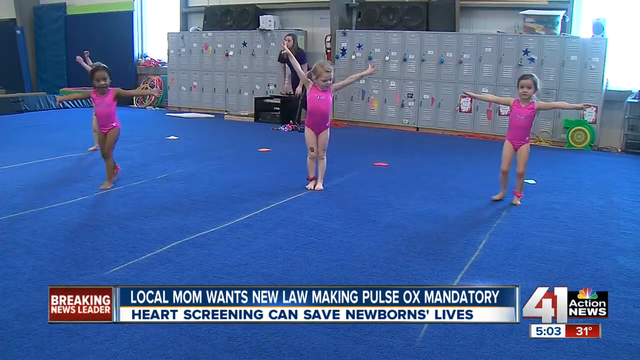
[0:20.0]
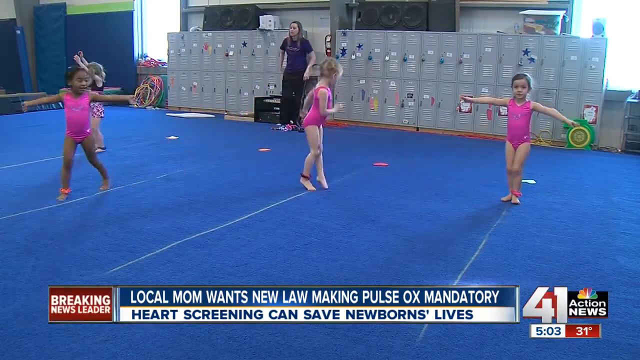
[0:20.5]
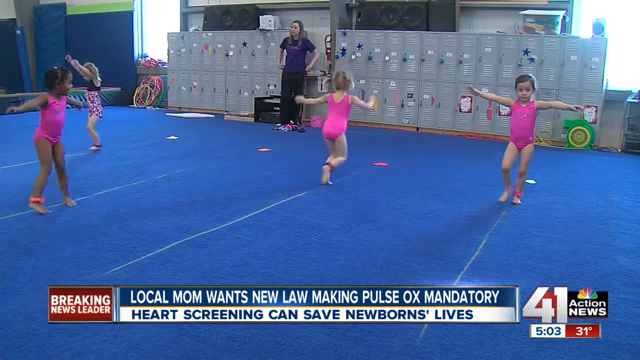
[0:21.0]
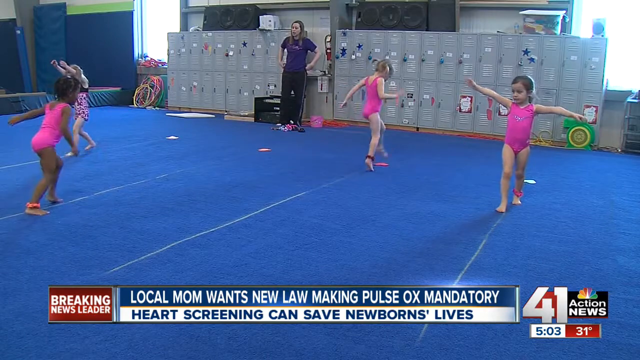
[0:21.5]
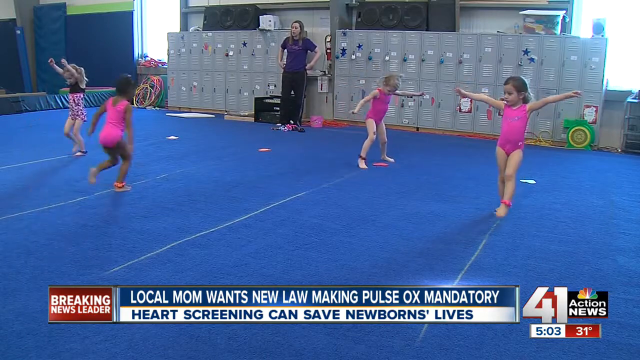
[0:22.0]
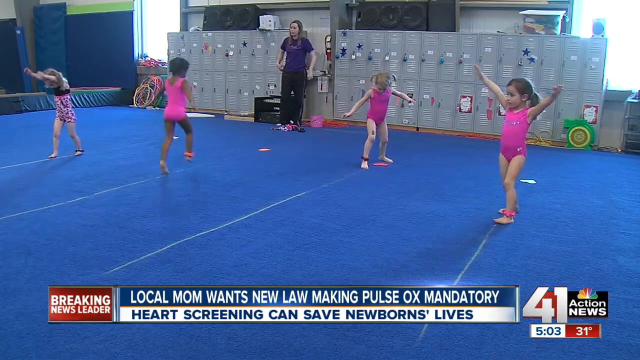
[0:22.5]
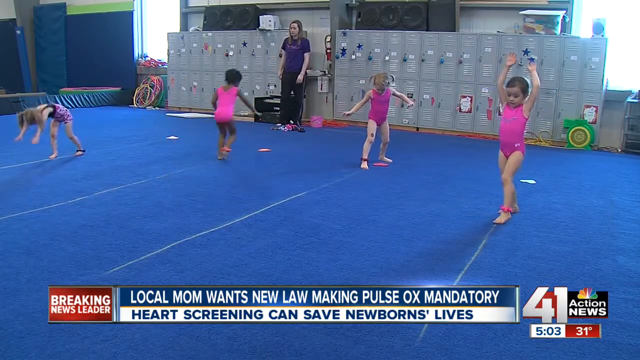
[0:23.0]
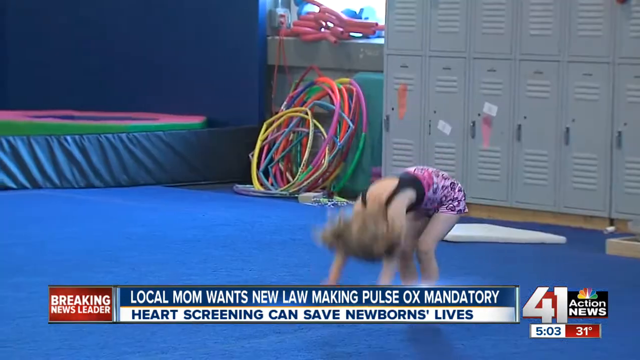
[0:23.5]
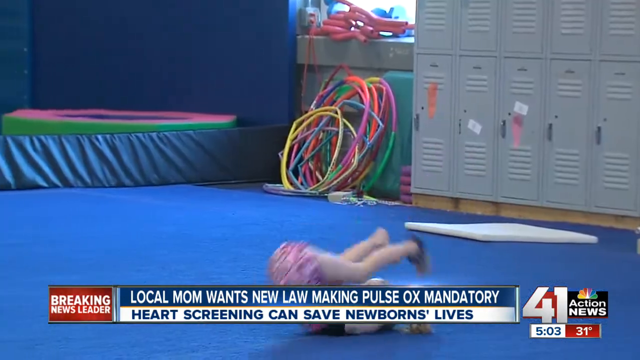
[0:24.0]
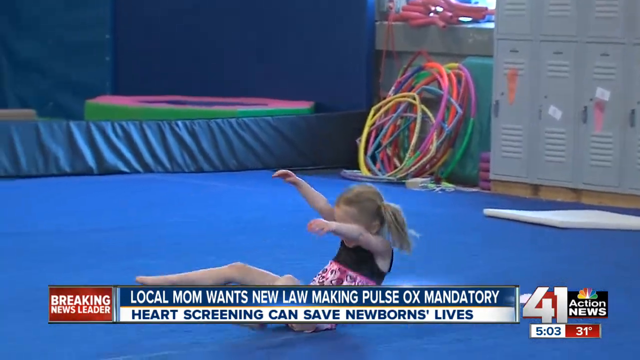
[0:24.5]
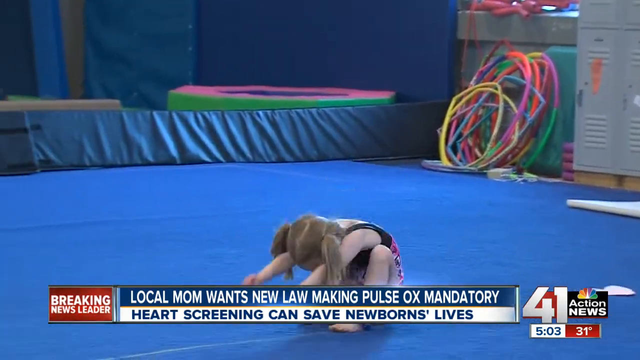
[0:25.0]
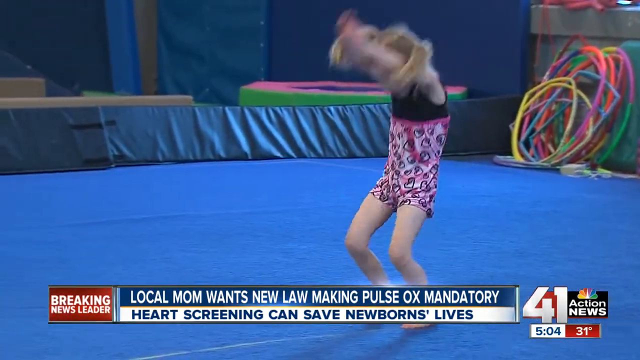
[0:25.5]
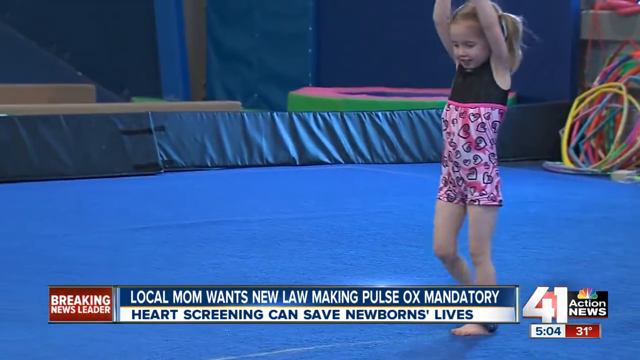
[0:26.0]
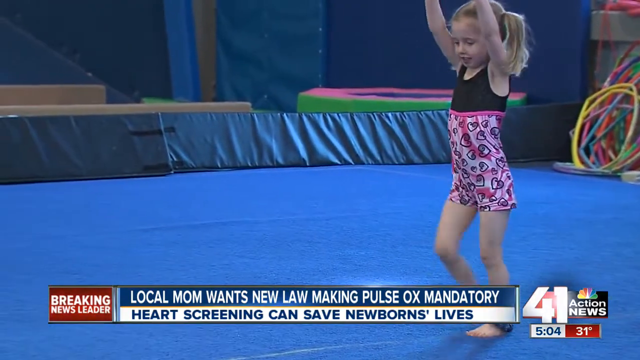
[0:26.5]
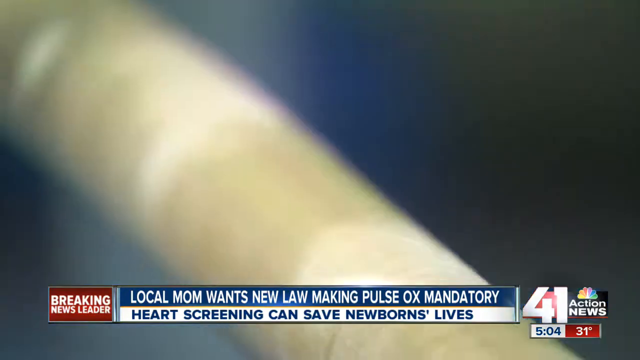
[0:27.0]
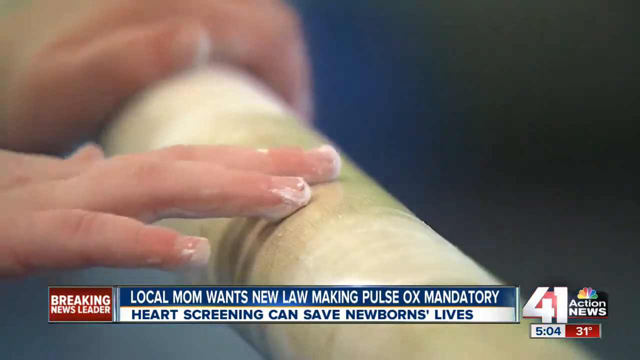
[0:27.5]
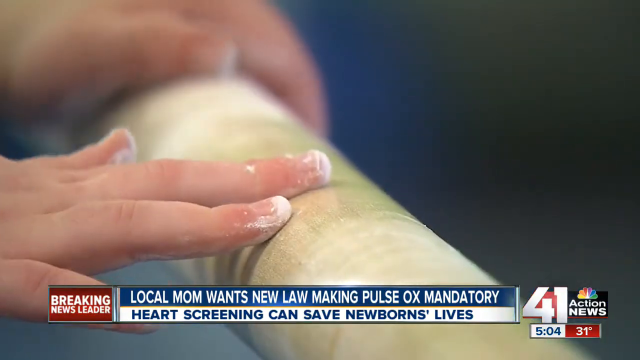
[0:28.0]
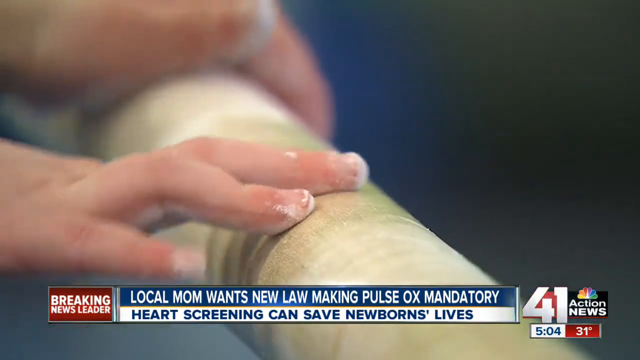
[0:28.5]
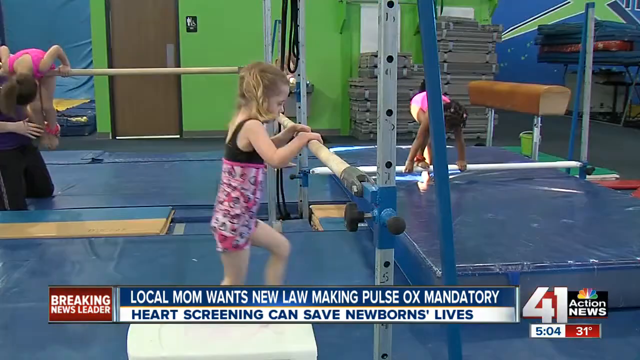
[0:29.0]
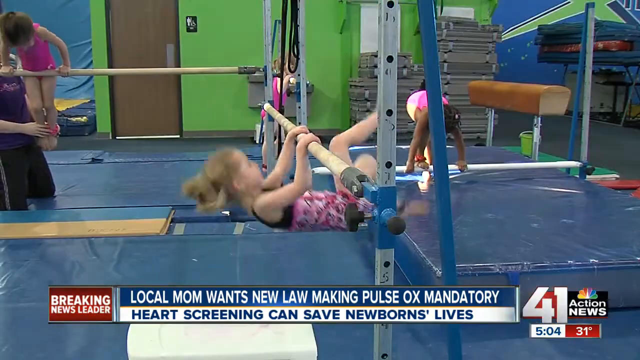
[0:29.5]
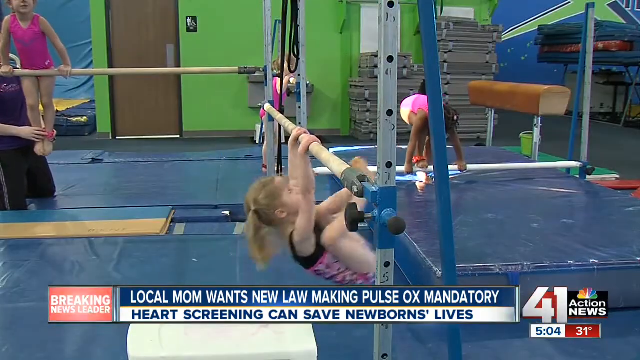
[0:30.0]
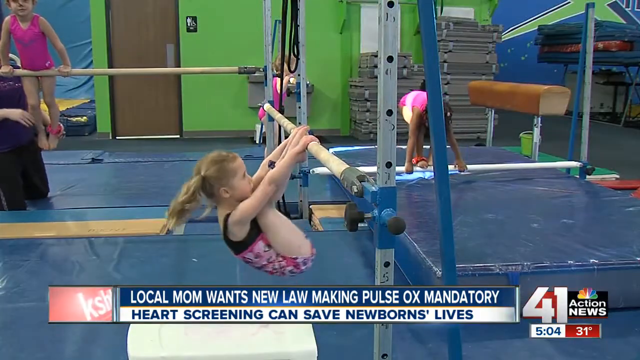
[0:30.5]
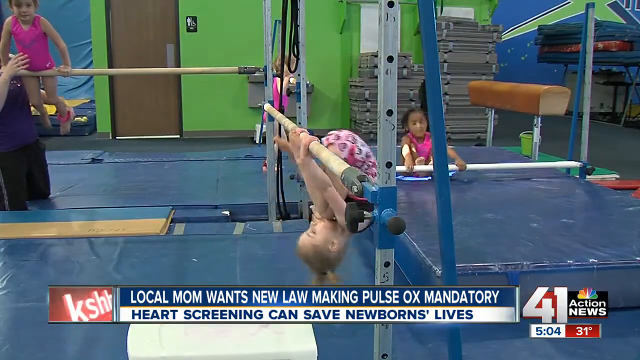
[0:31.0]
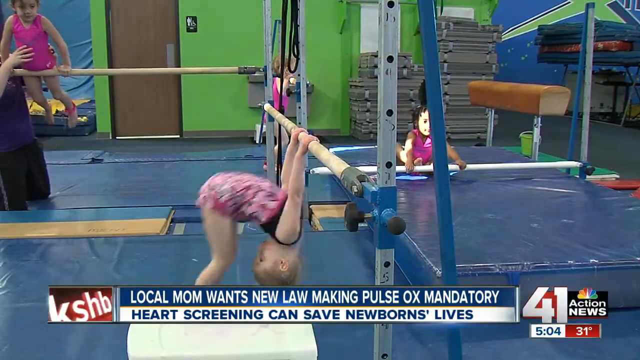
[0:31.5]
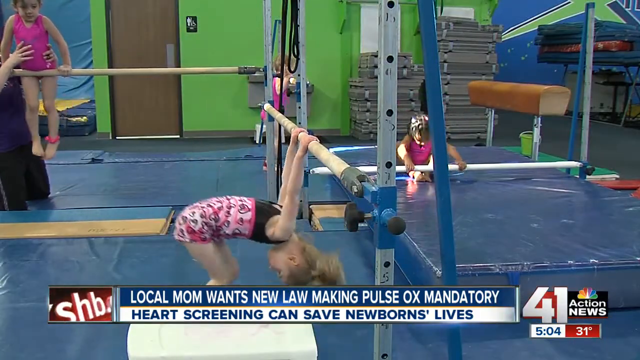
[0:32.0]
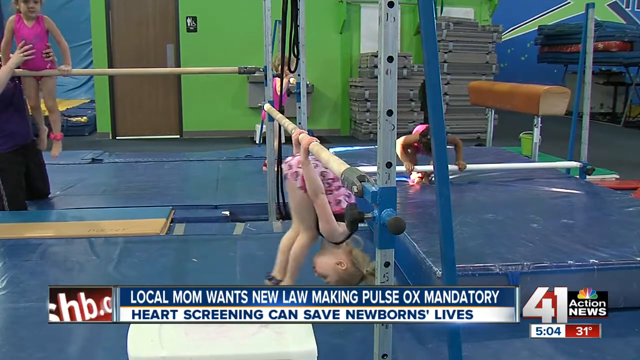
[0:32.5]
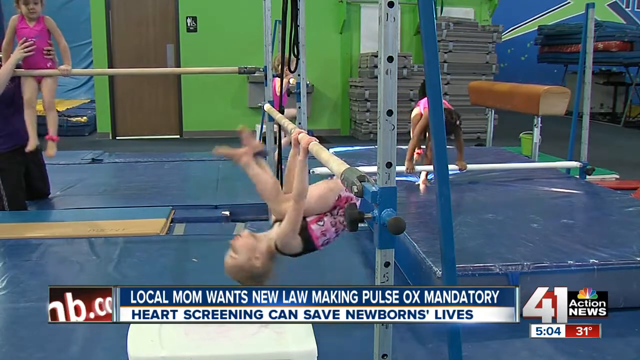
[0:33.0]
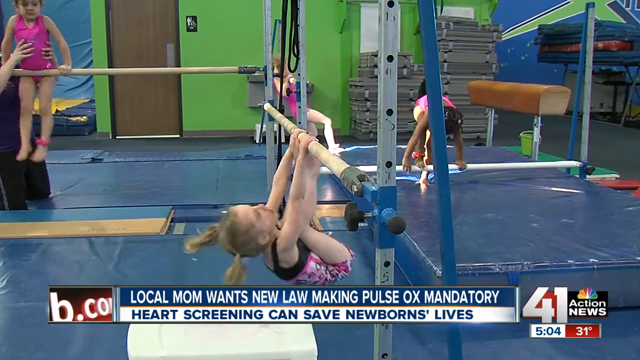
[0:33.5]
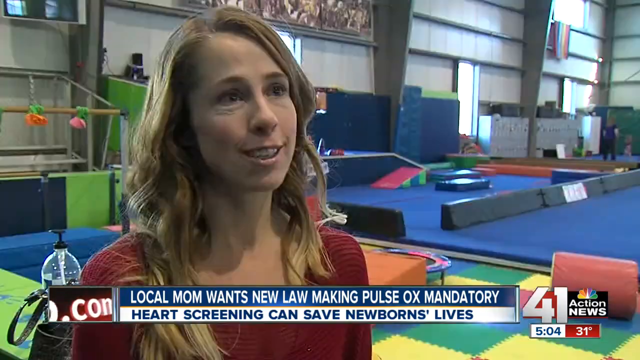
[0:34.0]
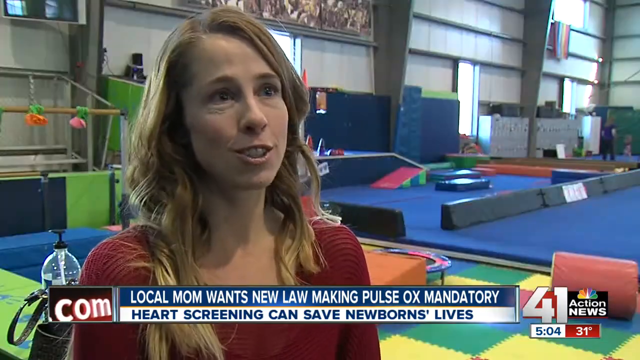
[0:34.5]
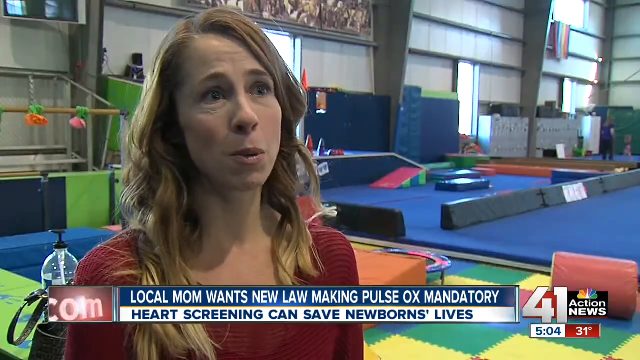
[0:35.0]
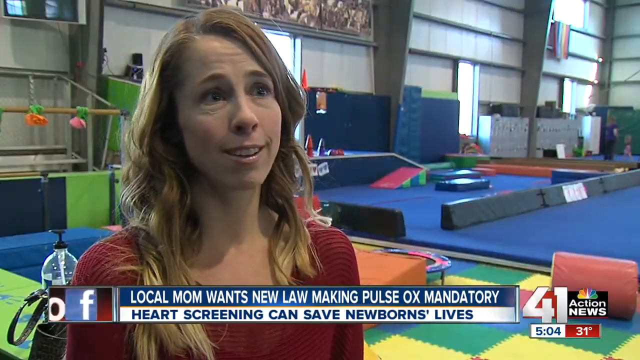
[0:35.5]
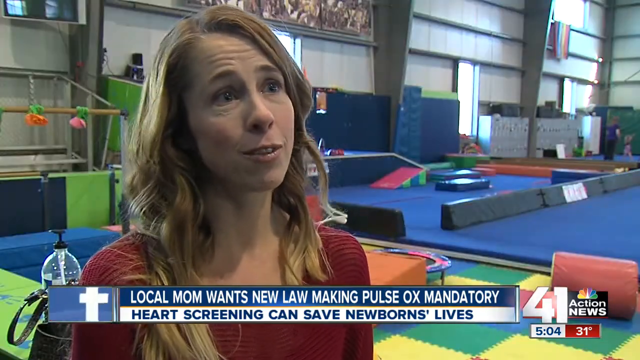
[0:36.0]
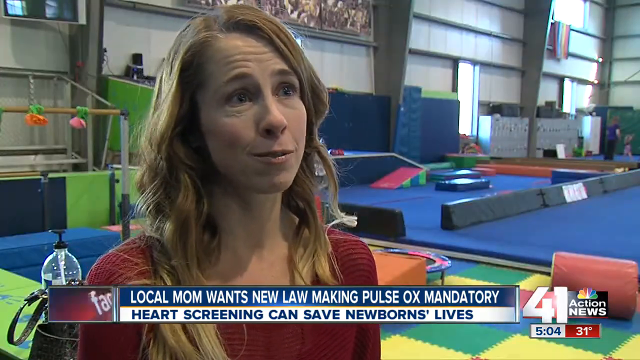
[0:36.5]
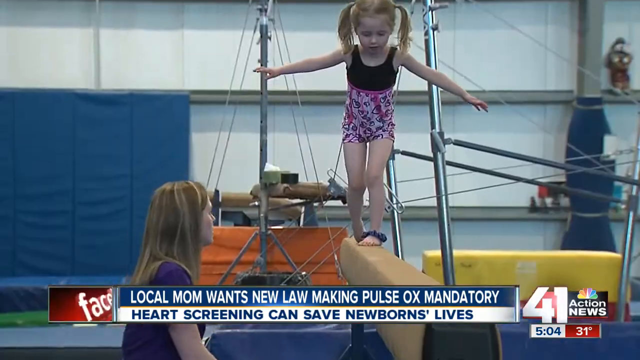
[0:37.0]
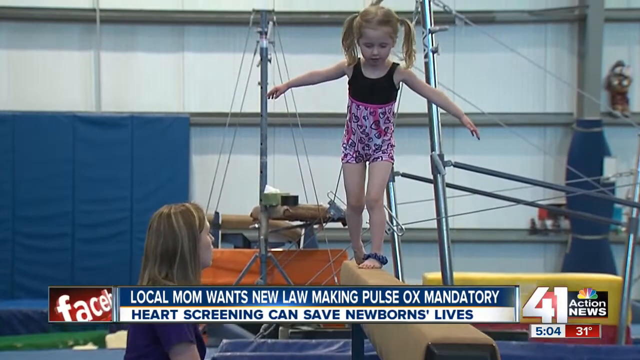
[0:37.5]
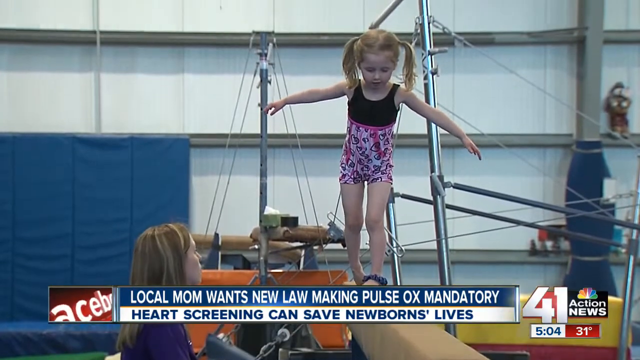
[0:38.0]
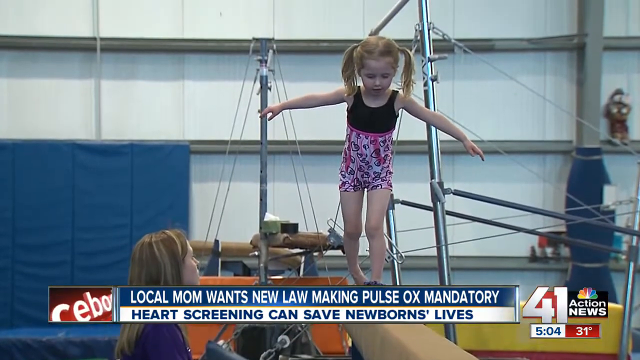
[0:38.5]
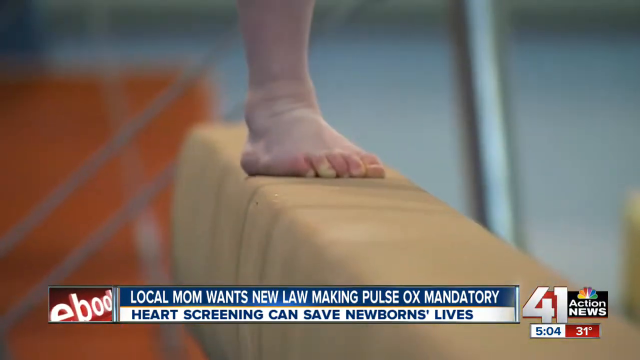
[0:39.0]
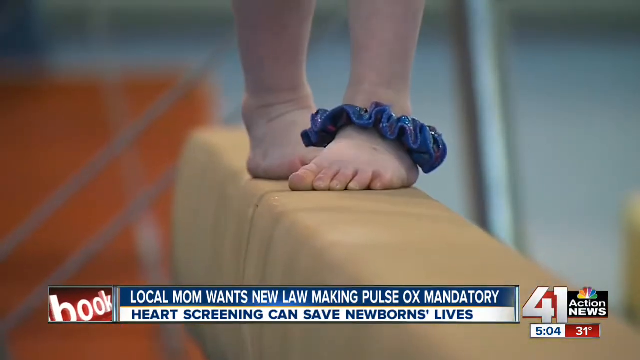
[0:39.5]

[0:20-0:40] The four young girls with the adult woman wear a pink theme, except for one, and all have scrunchies on their legs. They are doing flips. A small girl with whitish powder on her hand spins while holding onto a stick. Next, a woman with blond hair in a red jersey talks while facing the camera, with an indoor playground for kids behind her. Then a little girl walks on the stick while an adult woman guards her; the girl has a blue scrunchie on her left leg.